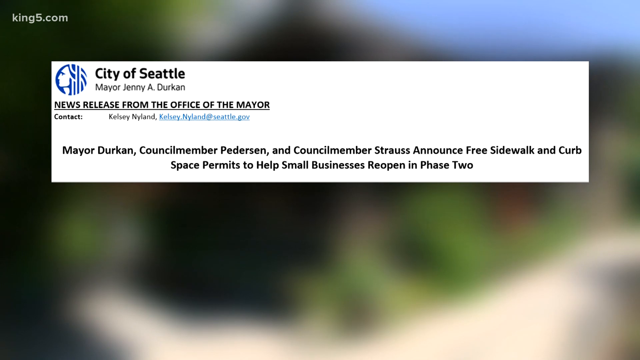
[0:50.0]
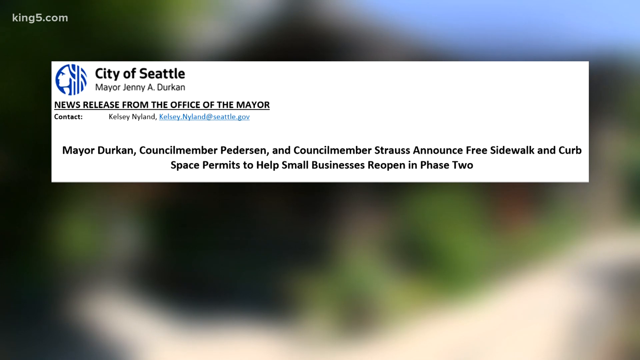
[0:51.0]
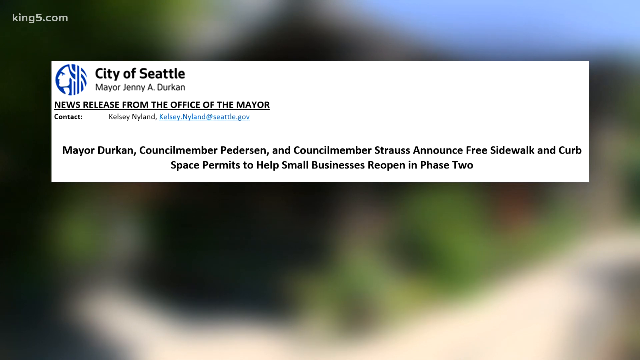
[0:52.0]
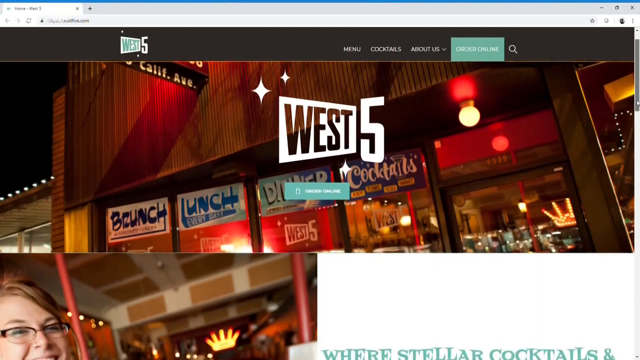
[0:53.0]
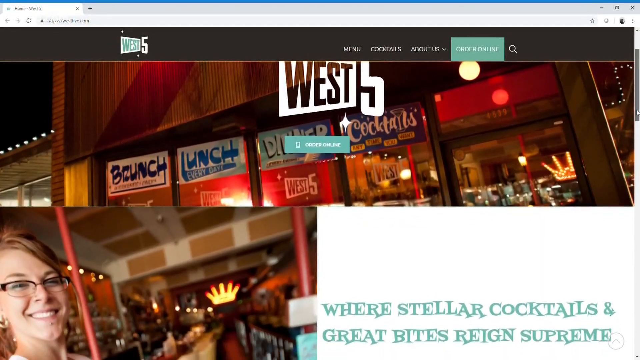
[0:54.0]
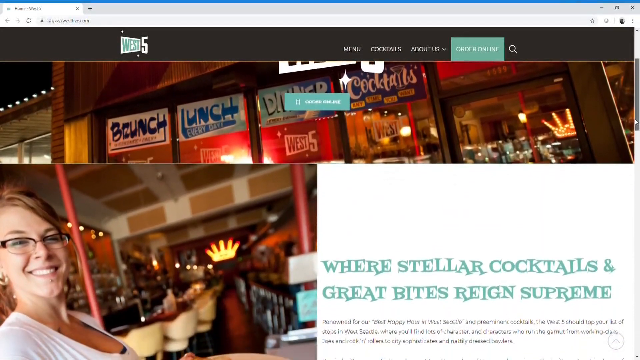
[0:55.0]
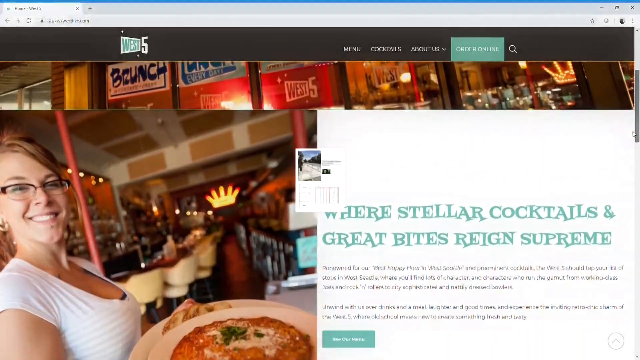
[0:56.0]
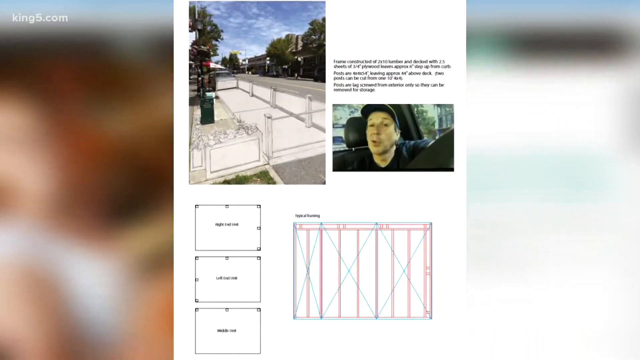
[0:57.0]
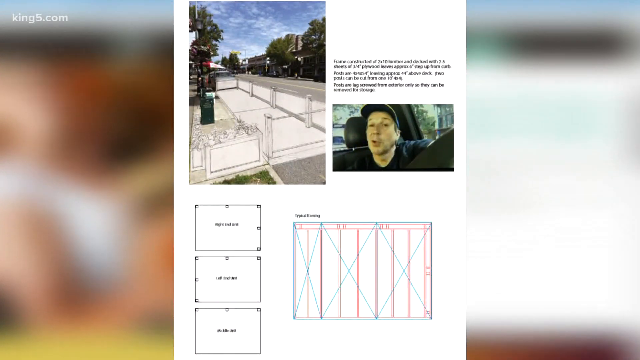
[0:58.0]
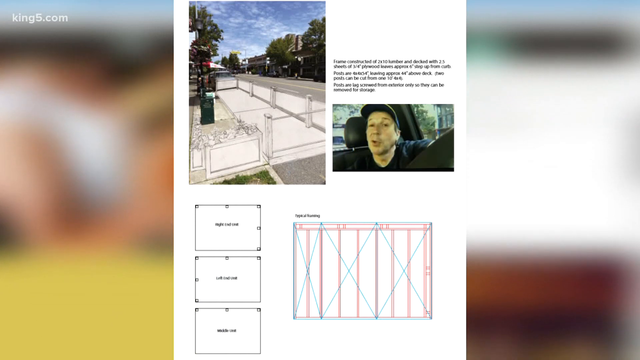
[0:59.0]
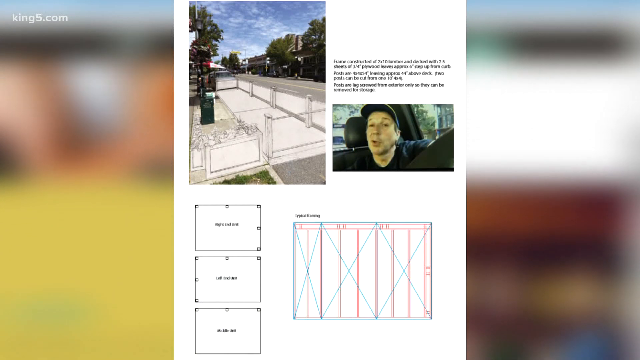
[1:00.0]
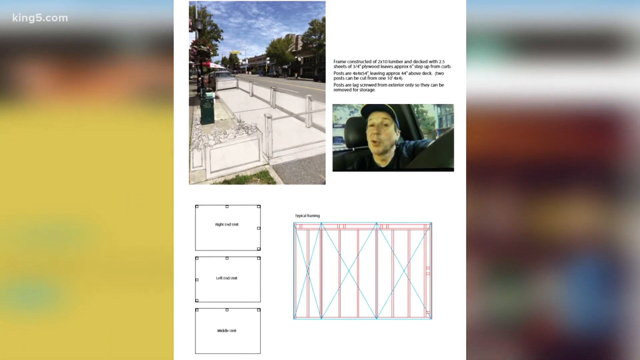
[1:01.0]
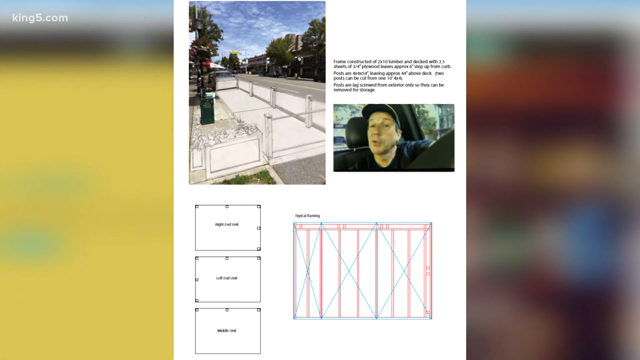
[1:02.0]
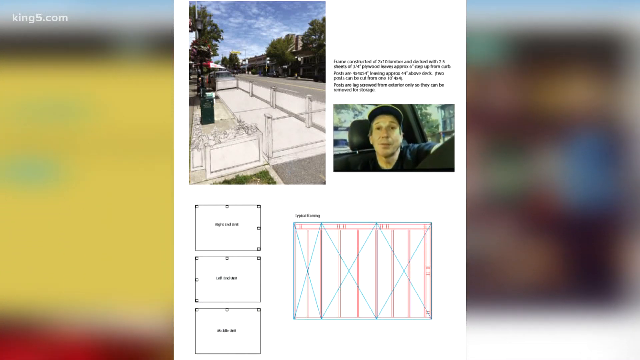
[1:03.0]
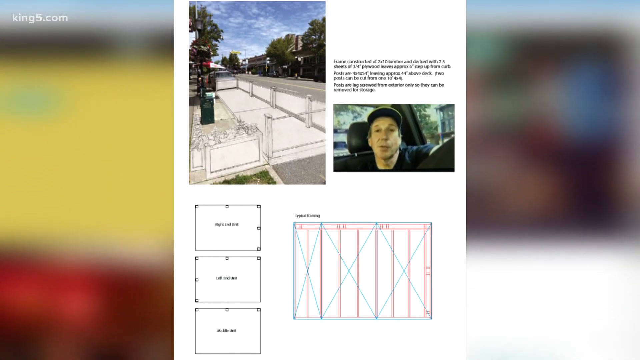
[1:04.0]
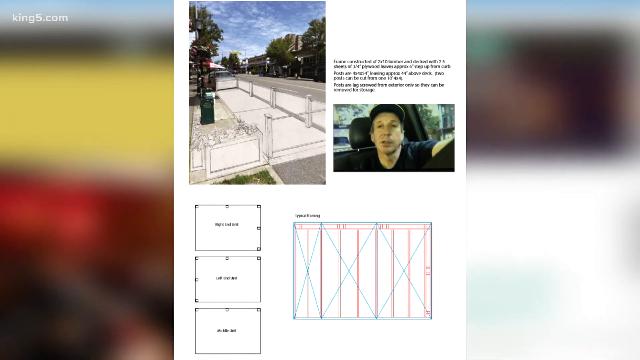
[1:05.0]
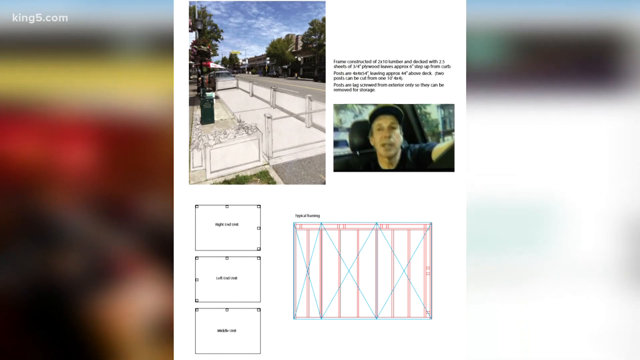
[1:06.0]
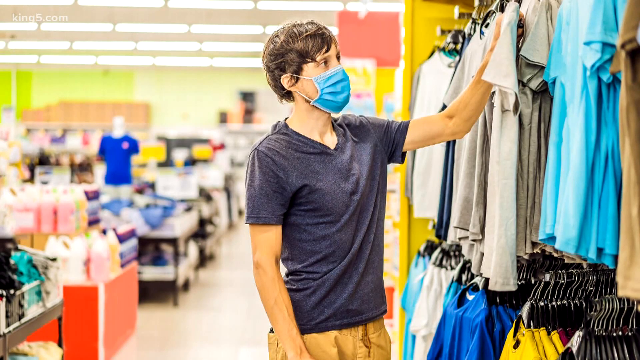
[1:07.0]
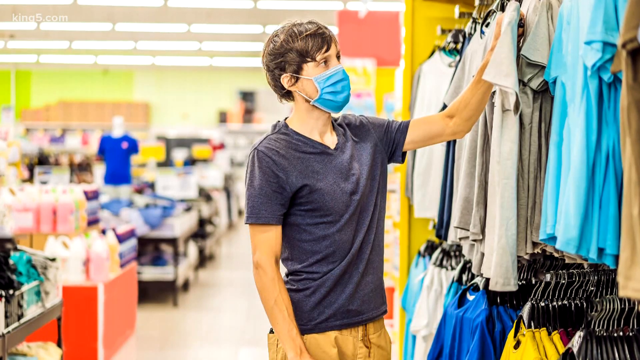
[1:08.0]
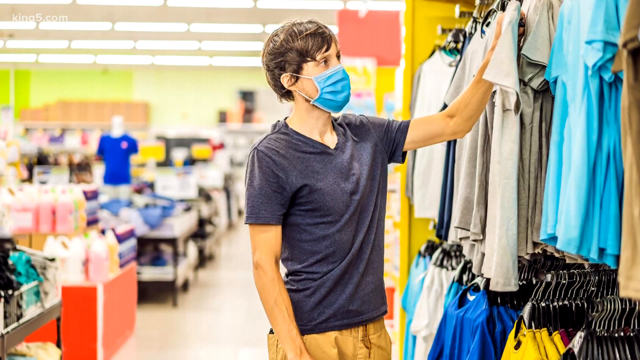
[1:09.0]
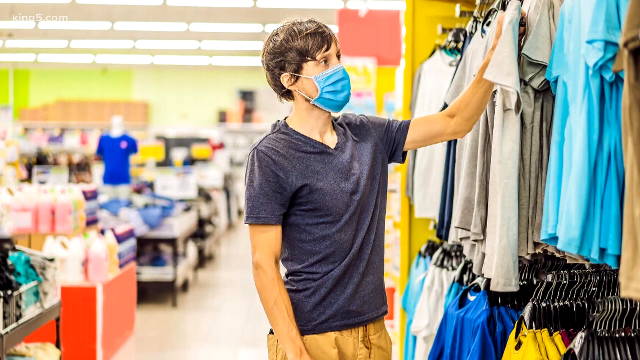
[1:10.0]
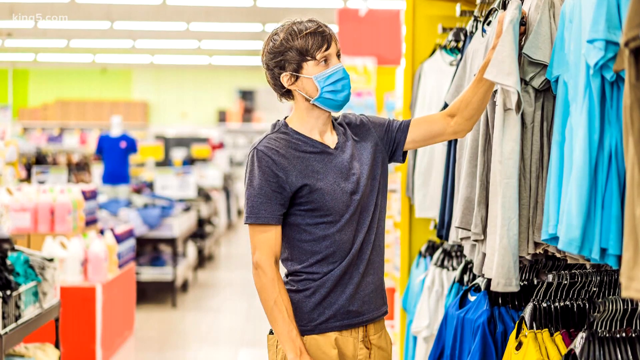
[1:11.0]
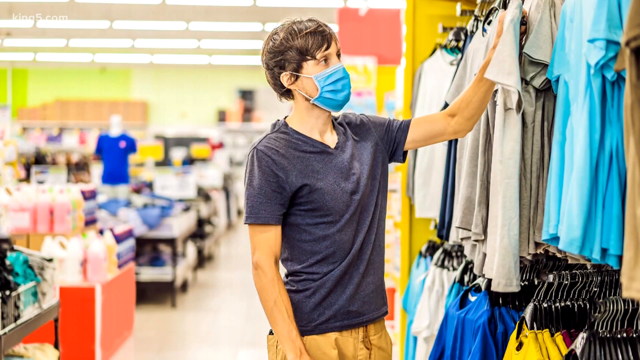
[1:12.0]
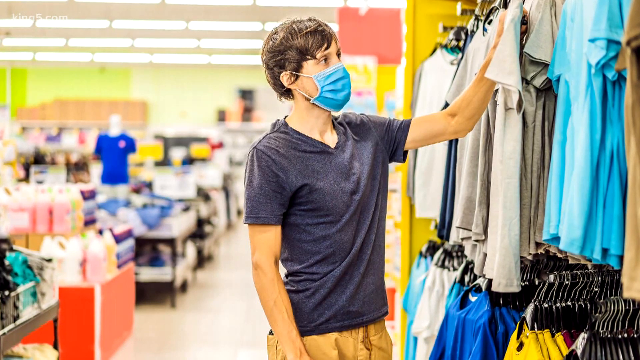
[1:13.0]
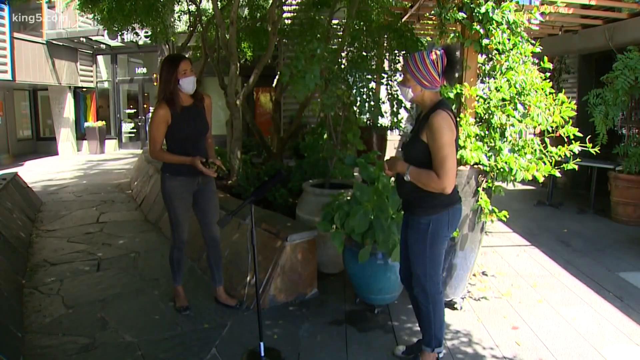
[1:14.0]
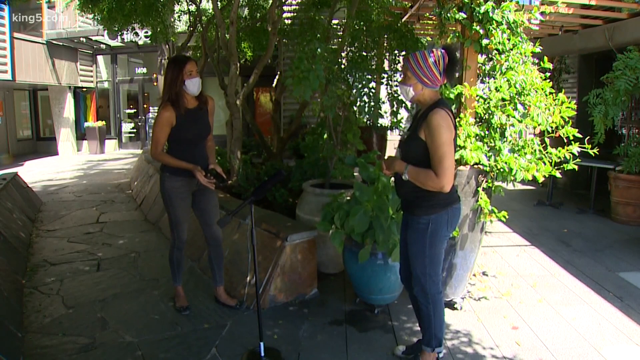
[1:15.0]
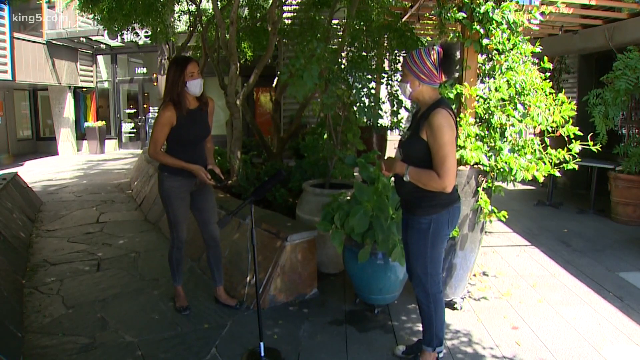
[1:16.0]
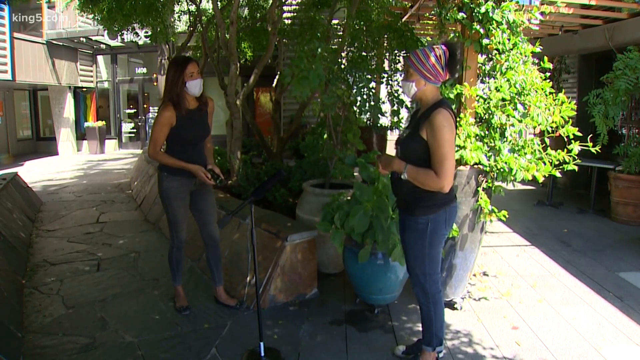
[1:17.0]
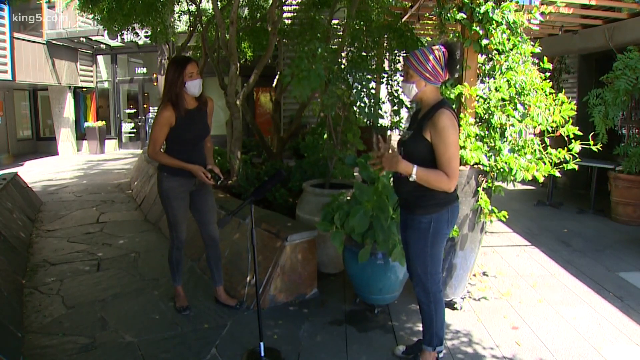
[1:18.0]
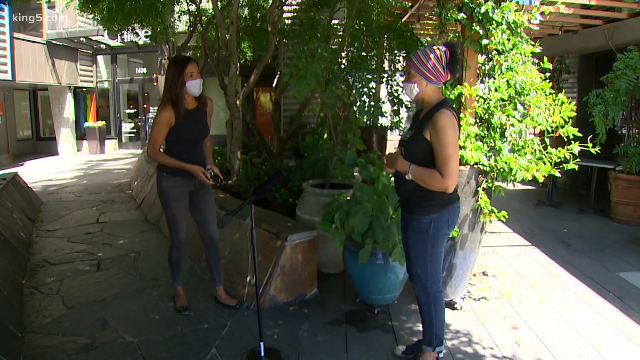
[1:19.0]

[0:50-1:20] A snippet of a news release is shown, reading "City of Seattle" and "News release from the Office of the Mayor, contact Kelsey Nyland," along with "Mayor Durkin, Councilmember Pedersen, and Councilmember Strauss announced free sidewalk and curb space permits to help small businesses reopen in Phase 2." Both women seen so far wear masks. A type of schematic is then shown, apparently of the restaurant being extended into the sidewalk.